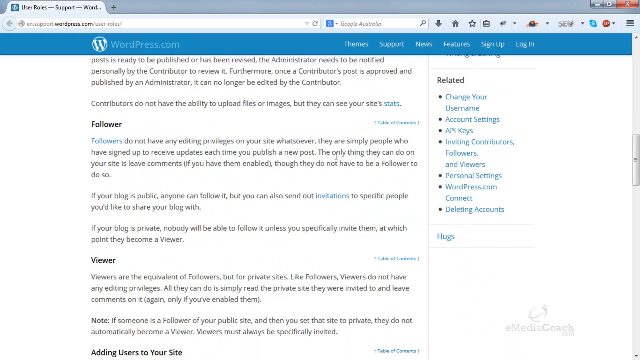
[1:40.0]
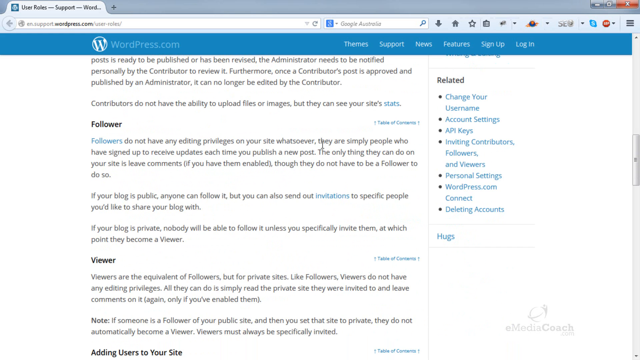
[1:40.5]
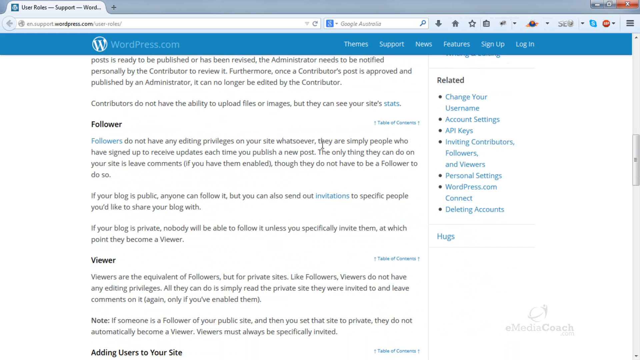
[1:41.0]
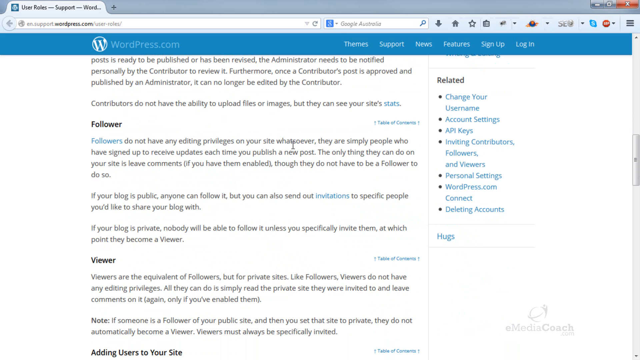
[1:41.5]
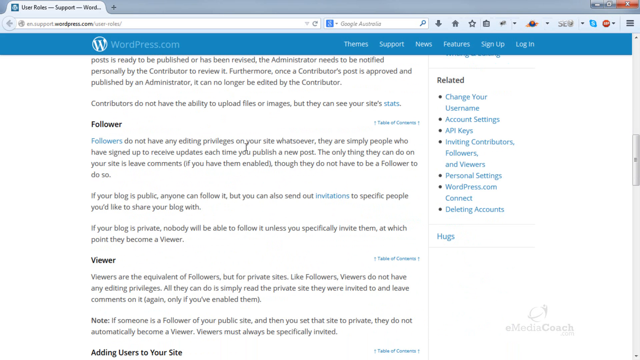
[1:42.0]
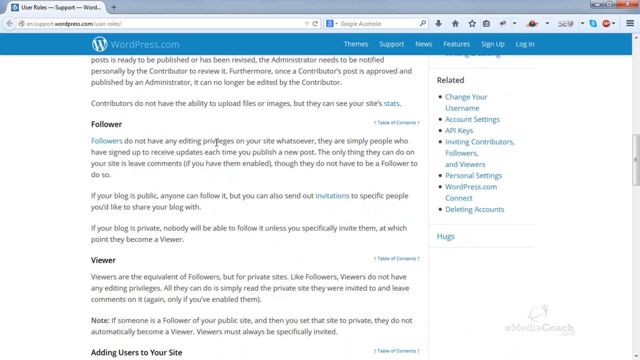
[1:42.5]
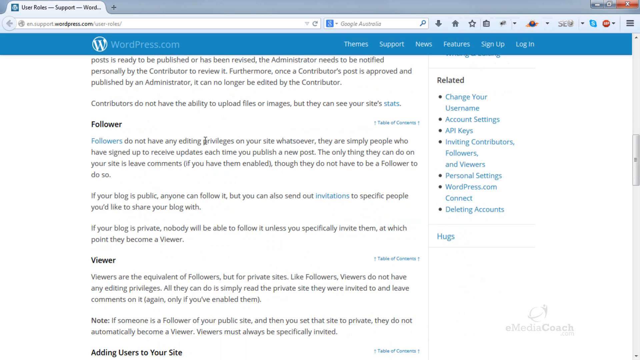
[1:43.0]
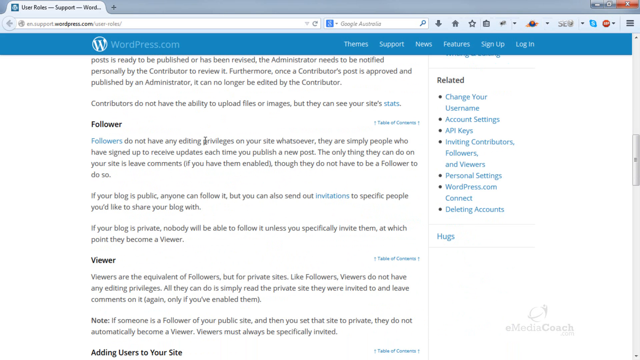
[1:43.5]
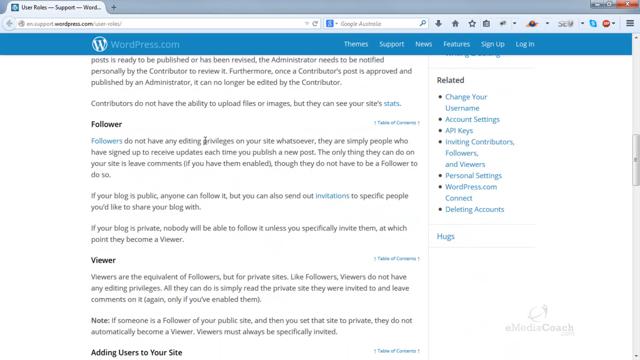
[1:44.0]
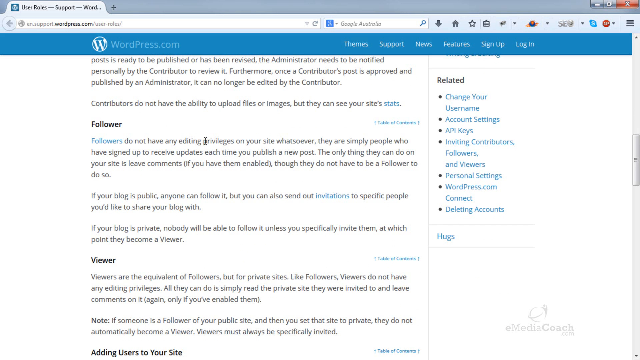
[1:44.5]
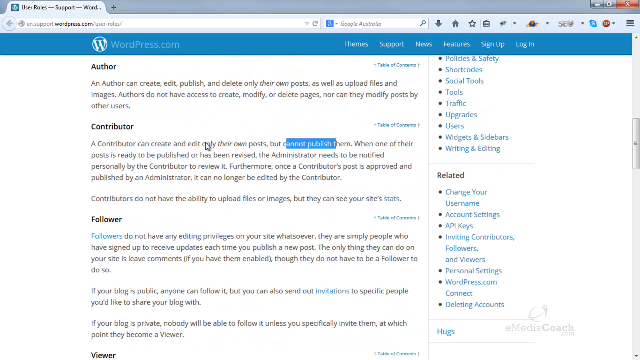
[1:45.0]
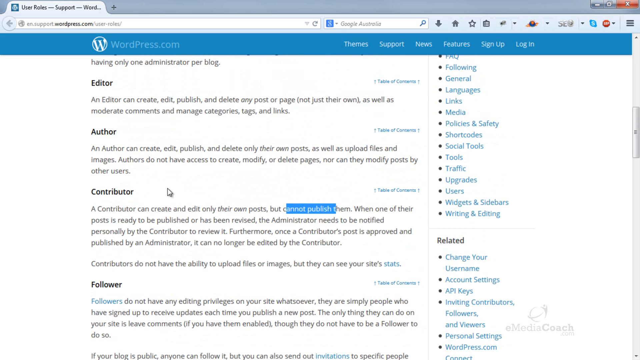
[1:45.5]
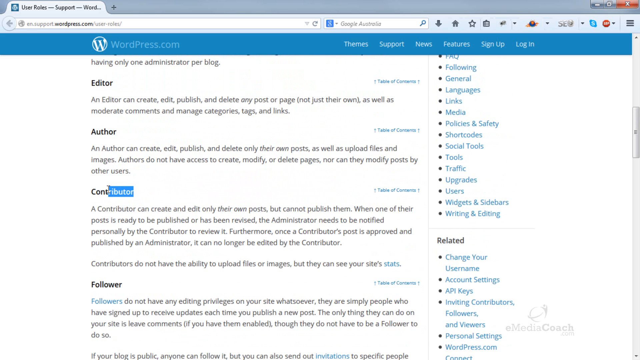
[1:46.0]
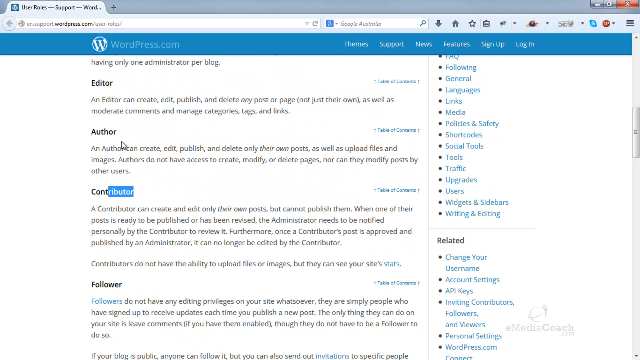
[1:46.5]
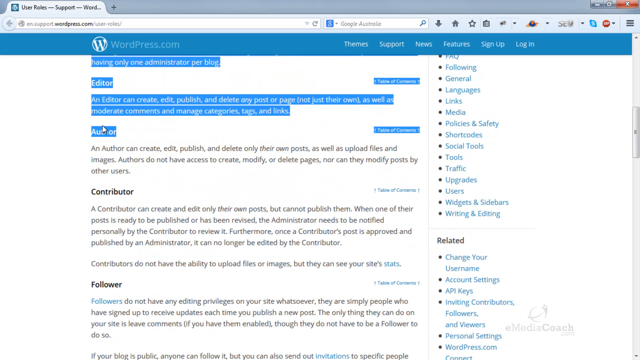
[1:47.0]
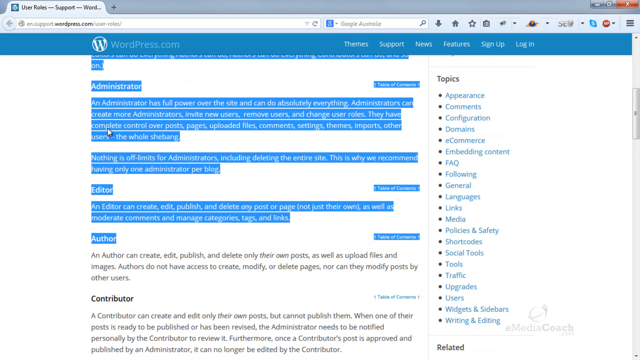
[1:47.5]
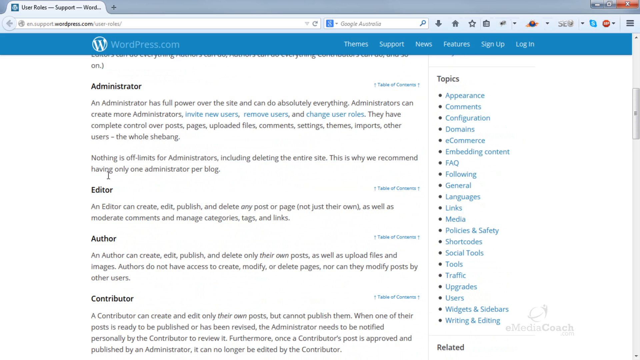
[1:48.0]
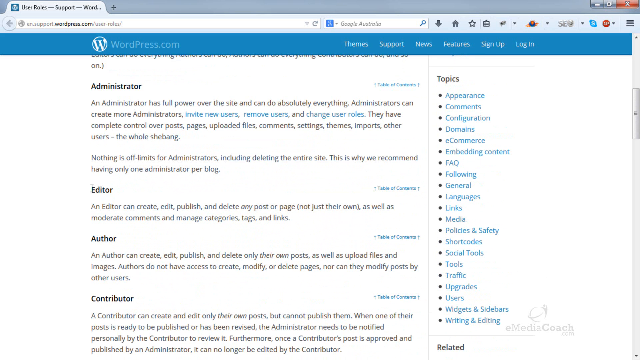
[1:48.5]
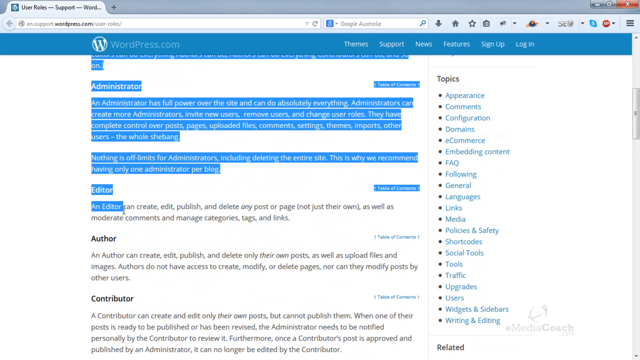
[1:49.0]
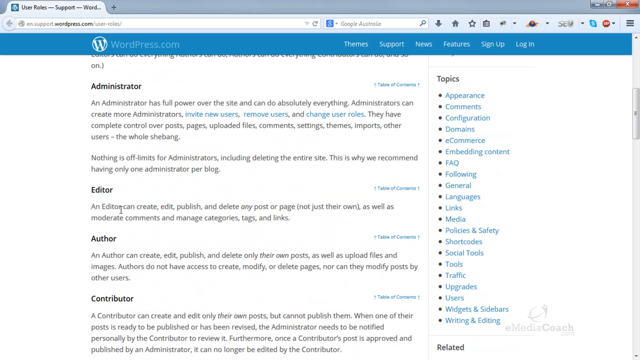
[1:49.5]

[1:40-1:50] The person is still on the WordPress user roles page. The follower section reads: "Followers do not have any editing privileges on your site whatsoever. They are simply people who have signed up to receive updates each time you publish a new post. The only thing they can do on your site is leave comments (if you have them enabled). If your blog is public, anyone can follow it, but you can also send out invitations to specific people you'd like to share your blog with. If your blog is private, nobody will be able to follow it unless you specifically invite them, at which point they become a viewer." The viewer section reads: "Viewers are equivalent of followers, but for private sites. Followers, viewers, do not have any editing privileges. All they can do is simply read the private site they were invited to, and leave comments on it again, only if you enable them. Note, if someone's a follower of your public site, and then you want to send to private, they do not automatically become a viewer. Viewers must always be specifically invited." A lot of text is then highlighted.